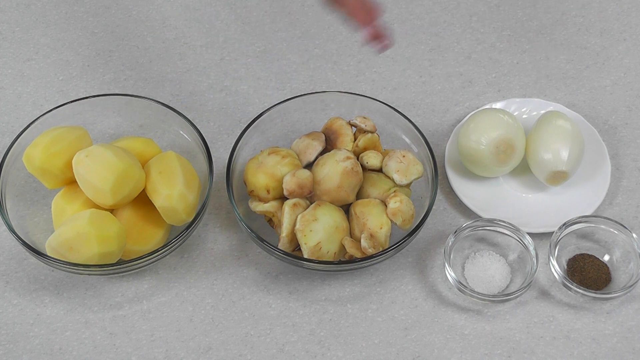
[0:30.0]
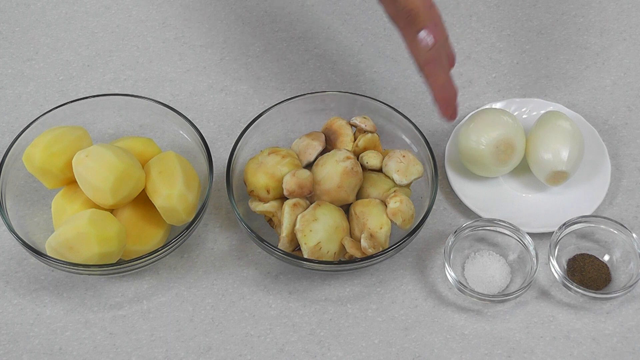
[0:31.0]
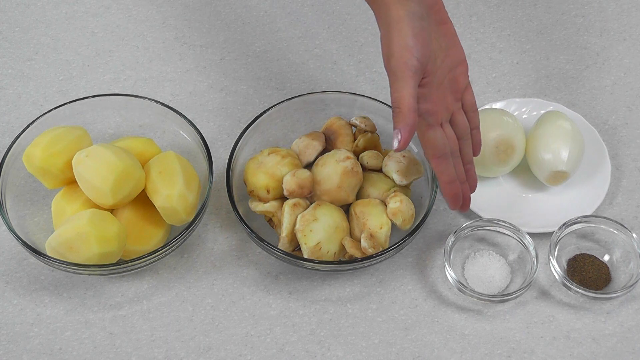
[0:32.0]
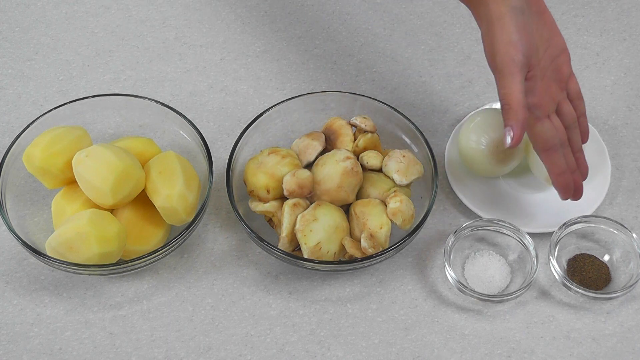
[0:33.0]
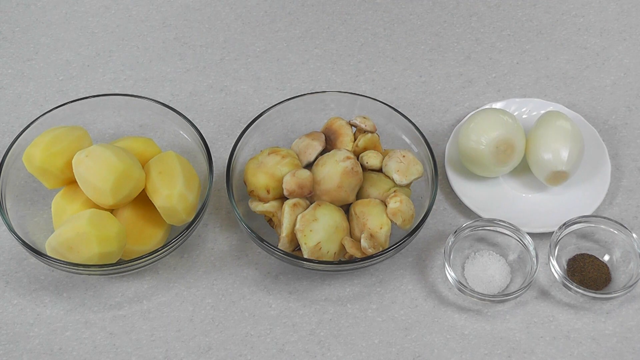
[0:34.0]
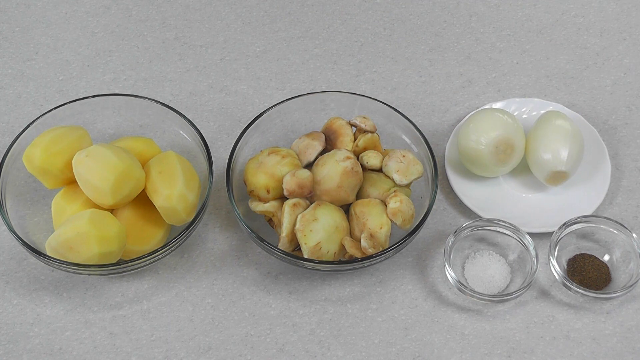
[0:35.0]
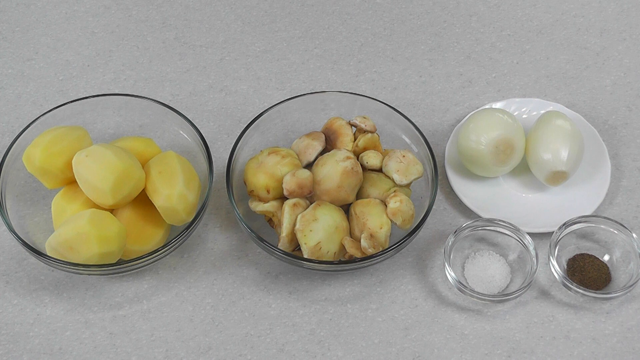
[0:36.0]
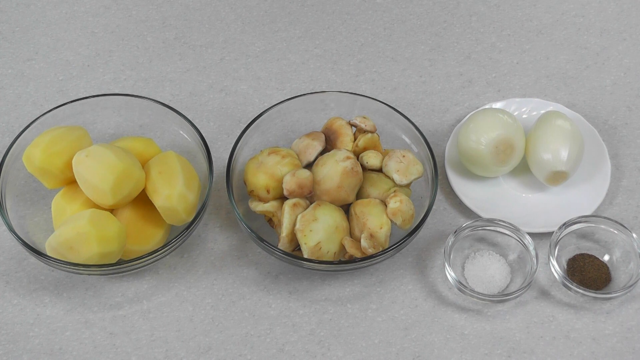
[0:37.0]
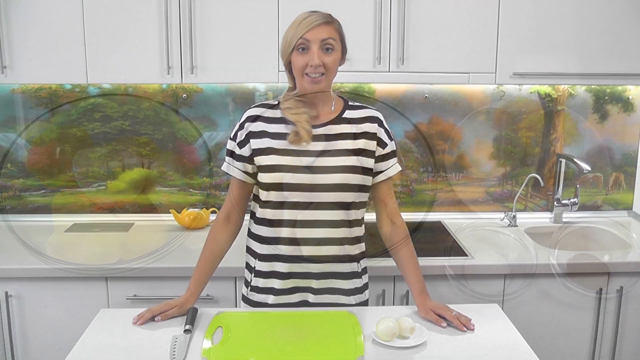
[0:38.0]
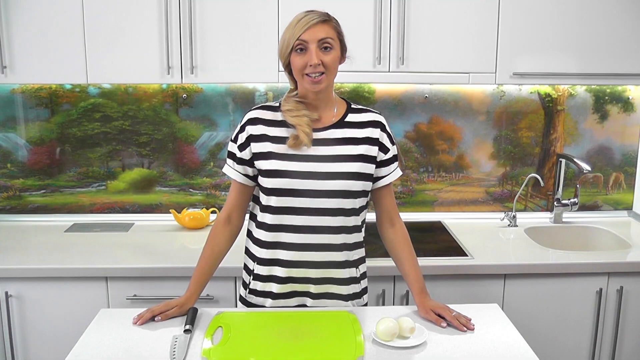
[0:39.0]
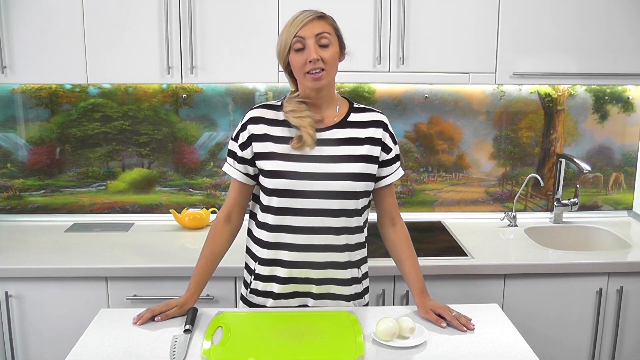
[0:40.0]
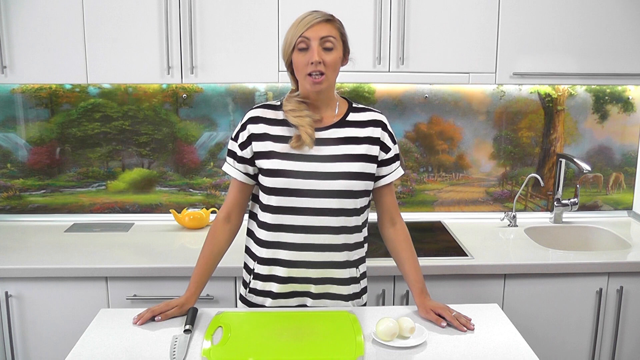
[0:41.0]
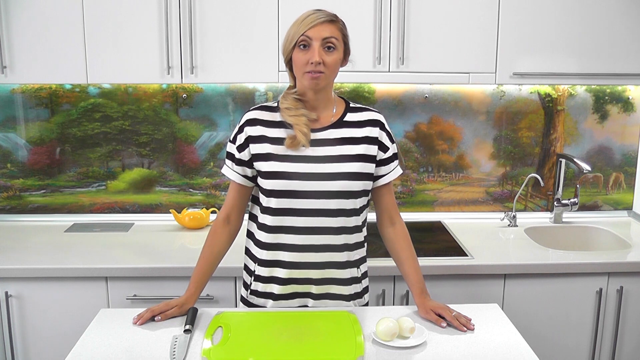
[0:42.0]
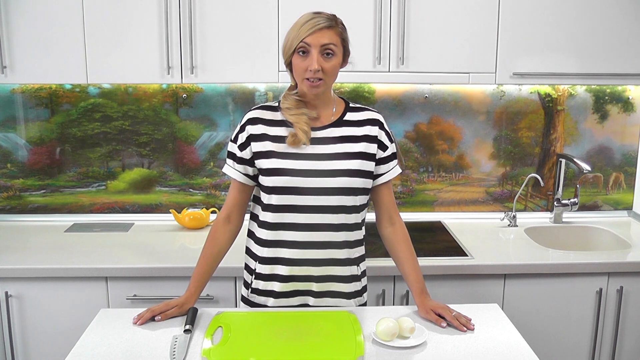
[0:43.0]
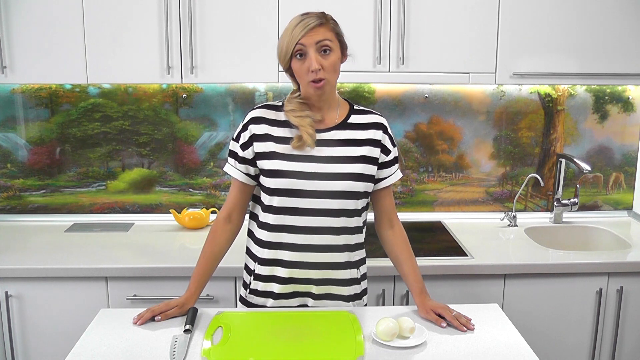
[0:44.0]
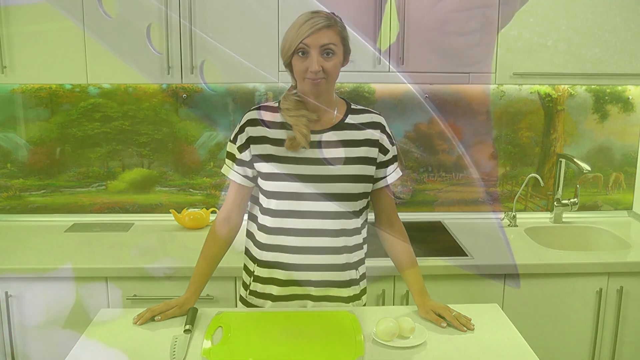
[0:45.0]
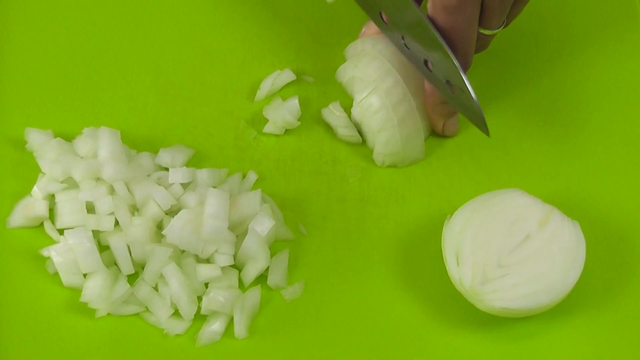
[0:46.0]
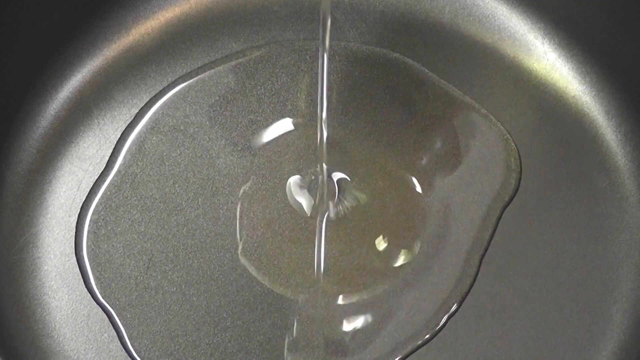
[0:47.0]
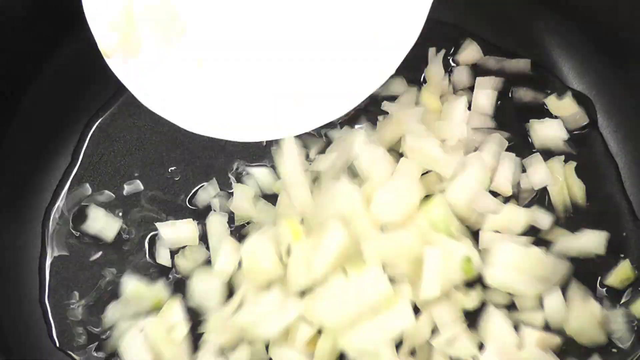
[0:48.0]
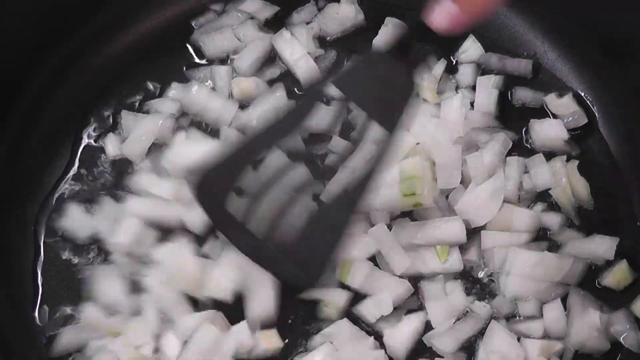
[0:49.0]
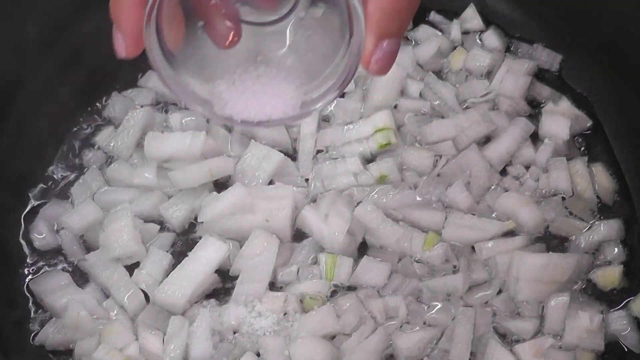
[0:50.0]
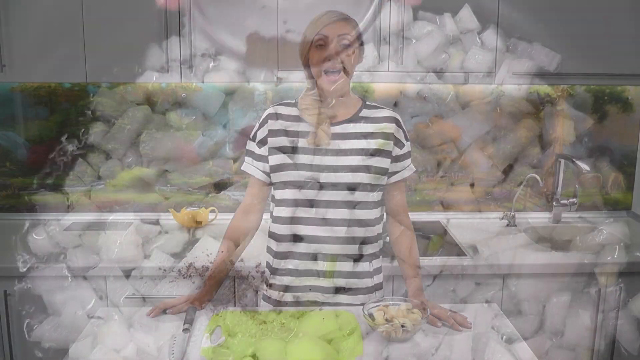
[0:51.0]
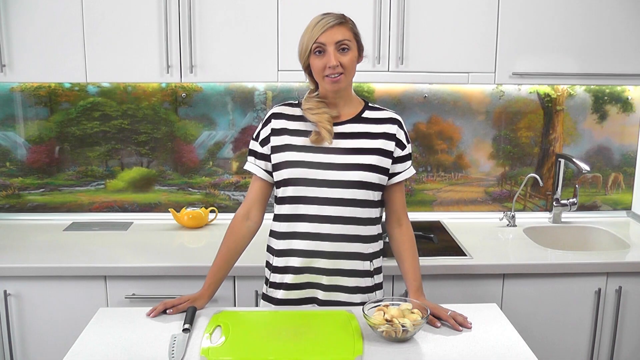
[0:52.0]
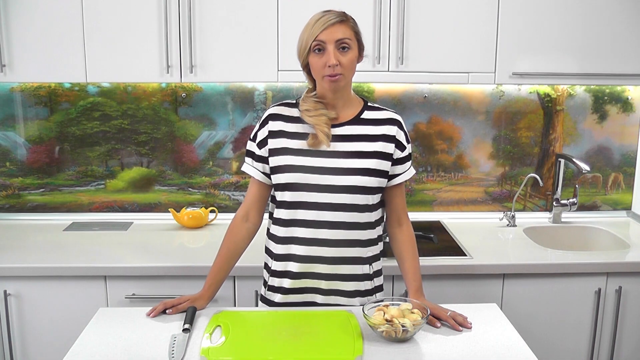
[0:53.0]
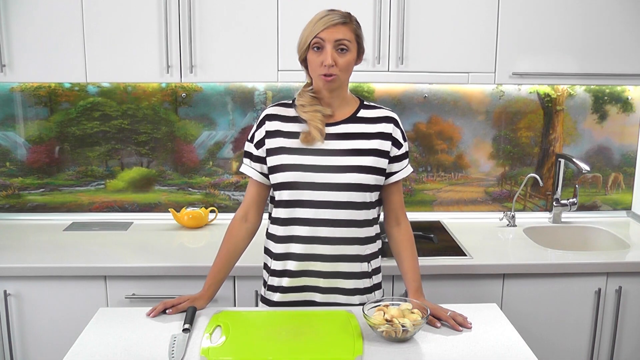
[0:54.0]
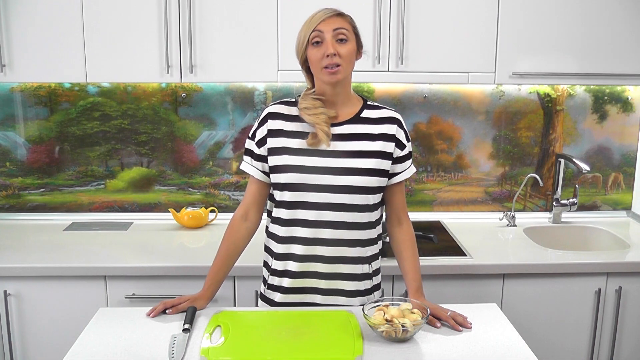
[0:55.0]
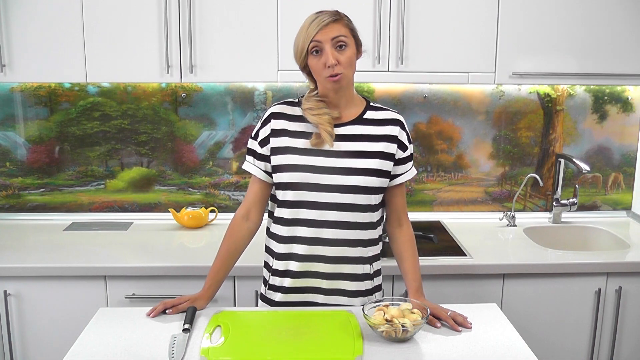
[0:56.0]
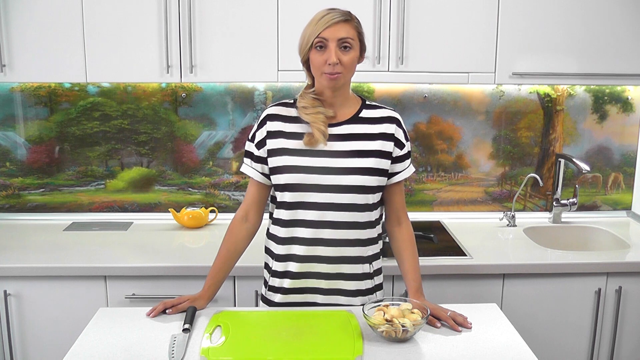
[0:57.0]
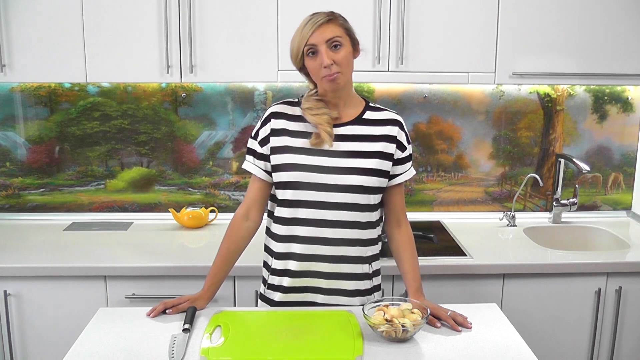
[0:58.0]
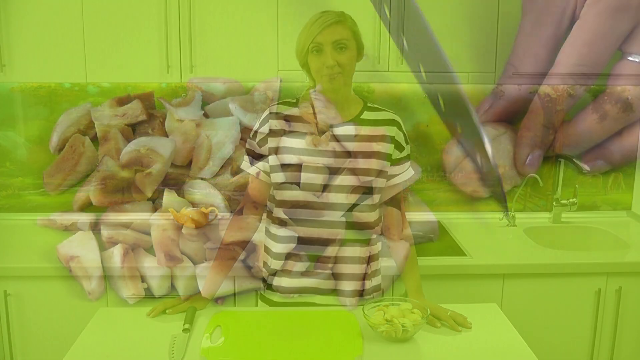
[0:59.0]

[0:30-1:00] Two bowls are in front of her: one holds apparently six or seven peeled potatoes, and the other, a clear bowl, holds darker potatoes that look less peeled and a little brown. Two onions with the ends cut off are on a white glass plate. Two smaller bowls appear to hold salt and pepper, one white and one black. Her hand, with painted nails, points to each ingredient. The view returns to her talking; she wears a black and white shirt, and a knife and a yellow cutting board are in front of her. She dices the onions, adds oil to a pan, puts the onions in, mixes them with a black spatula, and adds the salt and pepper to the pan. She goes back to talking at the table and then dices more.